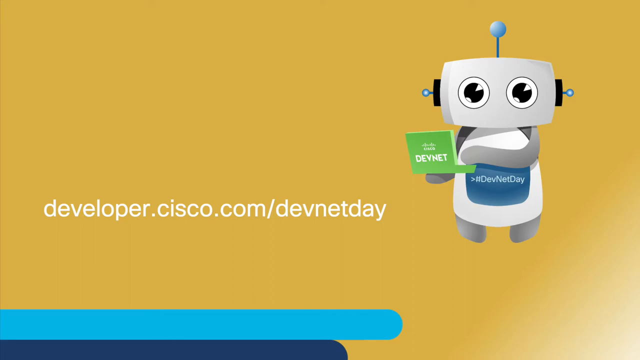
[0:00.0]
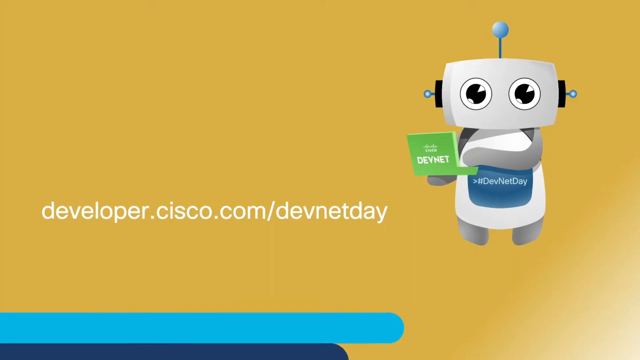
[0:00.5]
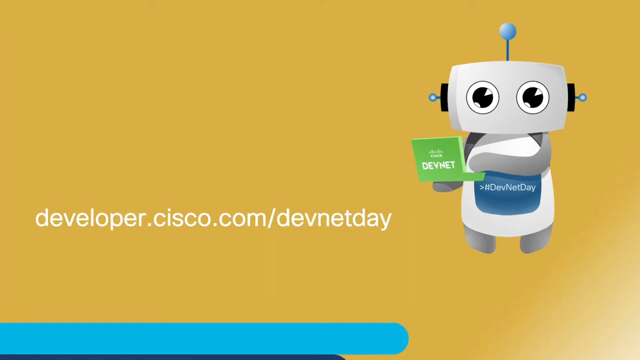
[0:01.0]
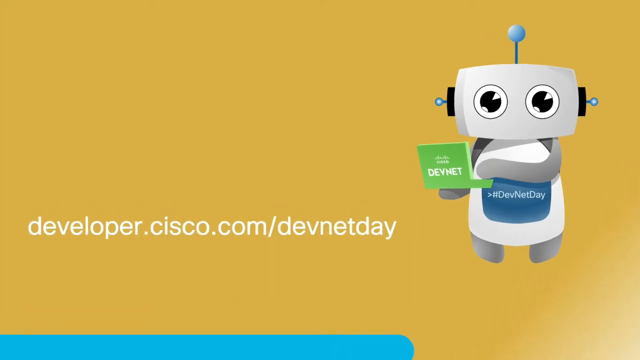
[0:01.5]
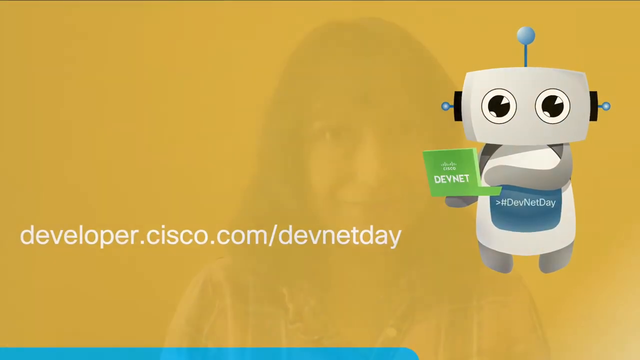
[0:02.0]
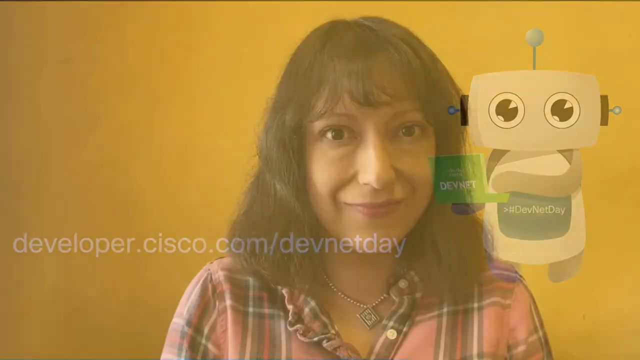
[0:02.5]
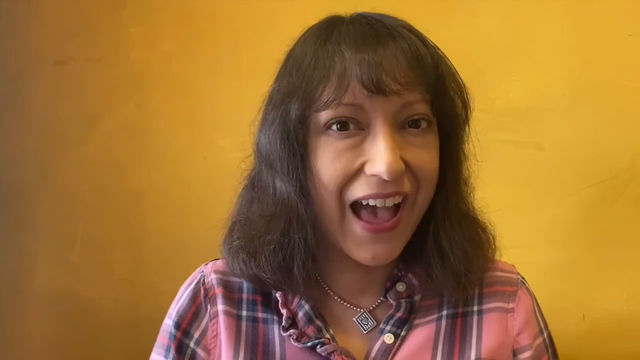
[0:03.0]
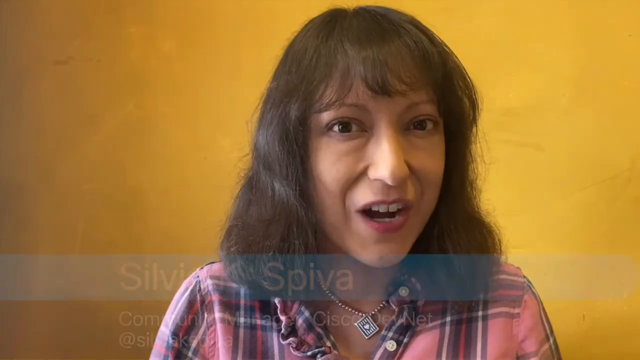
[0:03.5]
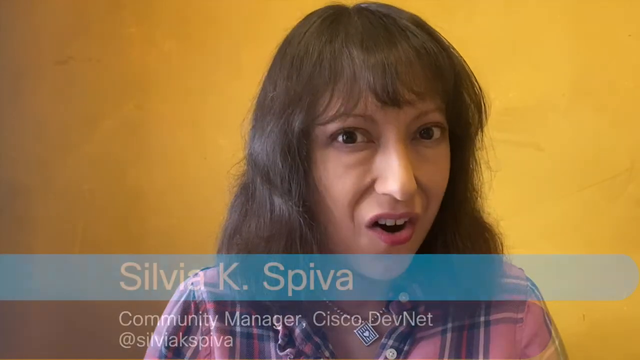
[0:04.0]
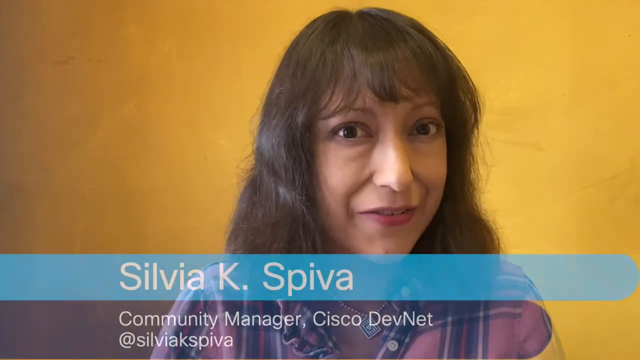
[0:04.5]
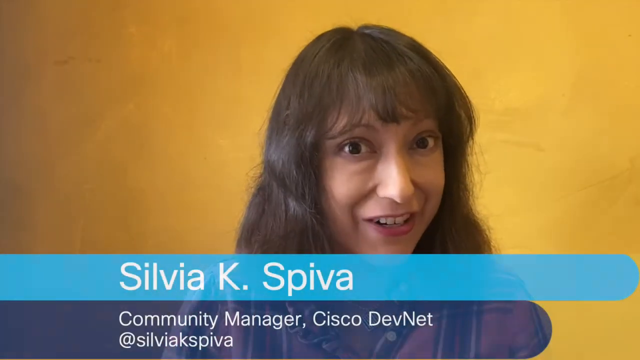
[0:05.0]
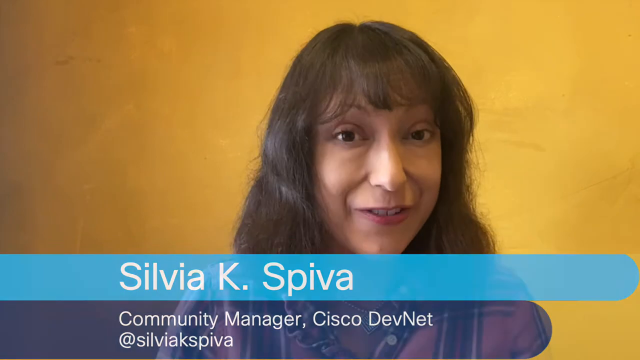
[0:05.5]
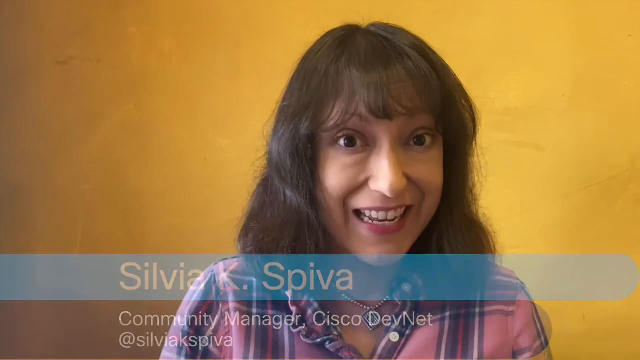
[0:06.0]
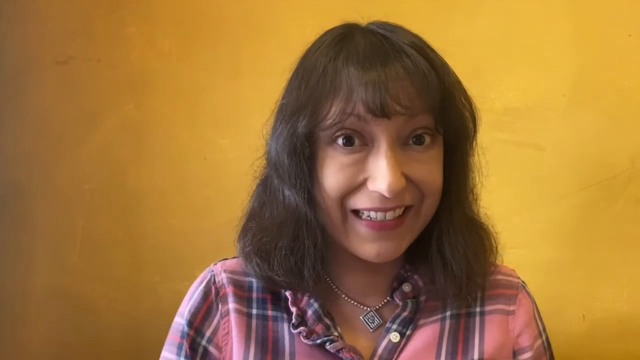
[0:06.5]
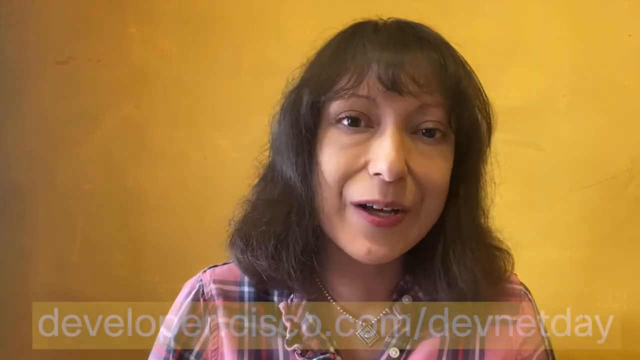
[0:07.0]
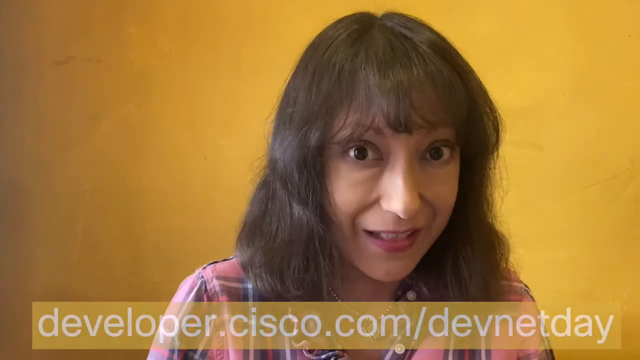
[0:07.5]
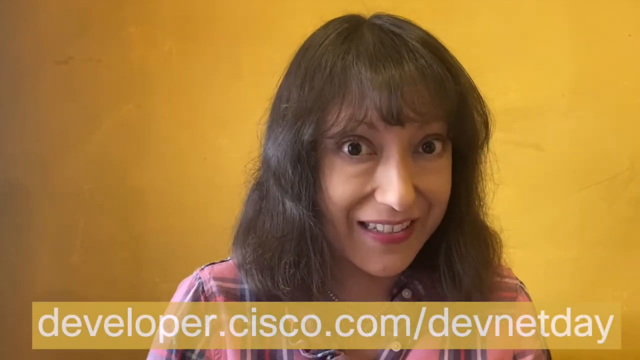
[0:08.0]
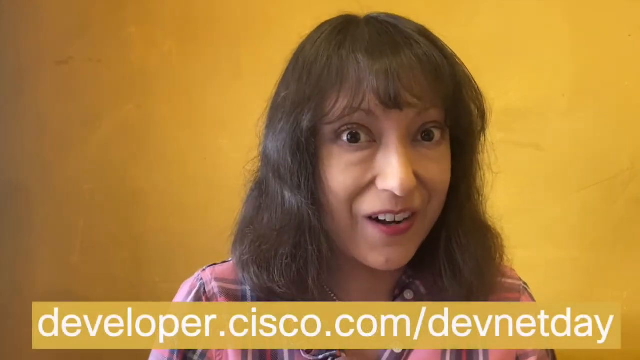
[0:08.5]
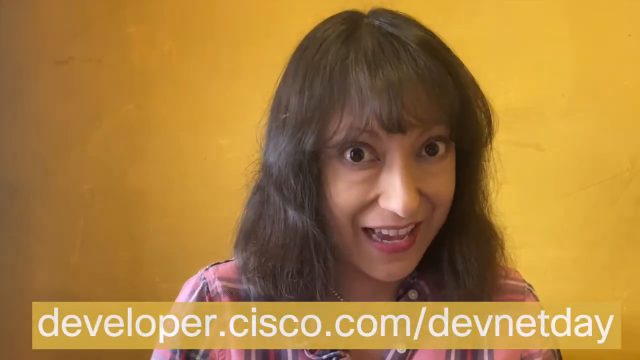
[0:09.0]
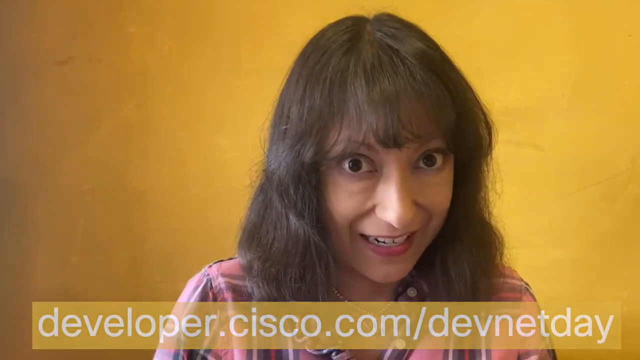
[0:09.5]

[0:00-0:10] Against a yellow background there is a little animated robot, and in the right corner is Sylvia, who is speaking. The robot holds a green computer in its right hand, and its left upper limb comes over toward the top of the computer. The robot has a rectangular head and face with round eyes that are white on the inside, each with an inner black circle. The right portion of each eye is white and comes to a point, while the lower left area of the eye is a semicircle. There are two black circles on each side of the head, and a small antenna sticks out at the top: a straight line with a ball on top.